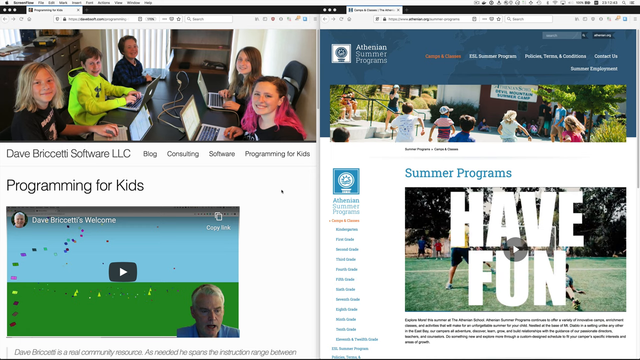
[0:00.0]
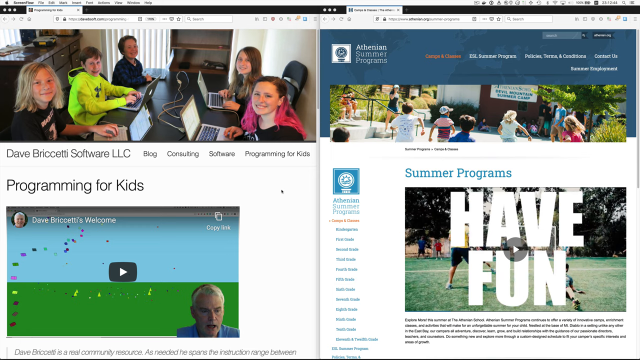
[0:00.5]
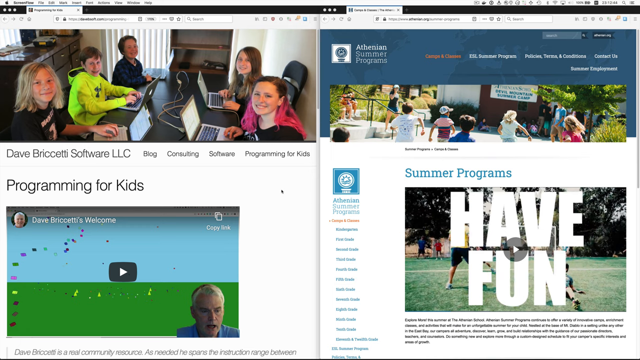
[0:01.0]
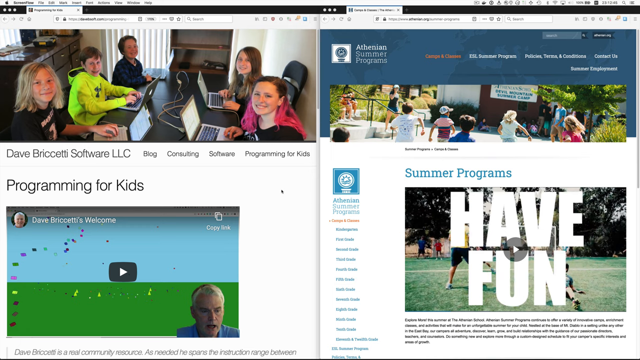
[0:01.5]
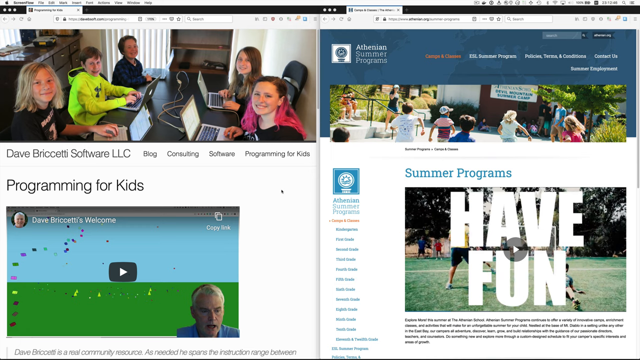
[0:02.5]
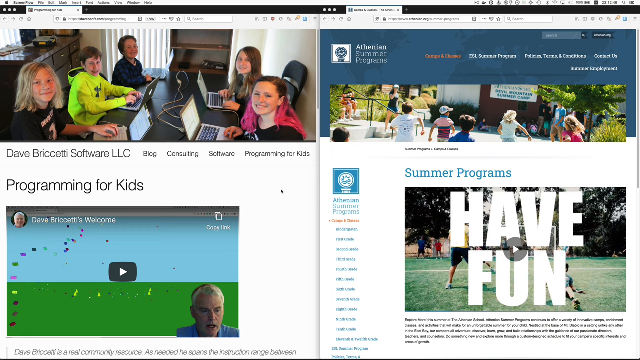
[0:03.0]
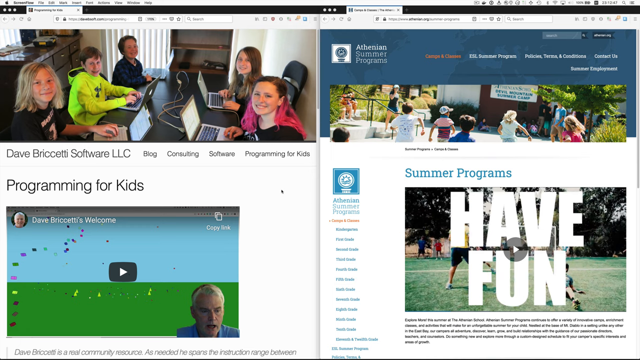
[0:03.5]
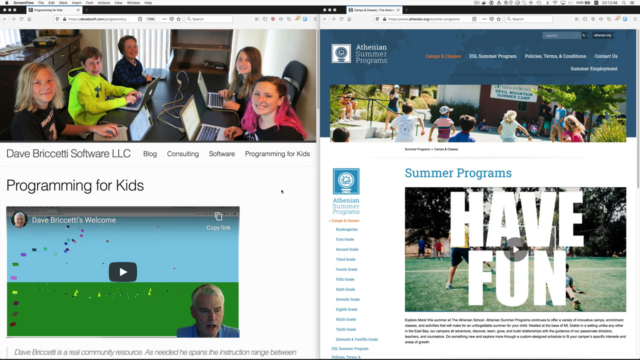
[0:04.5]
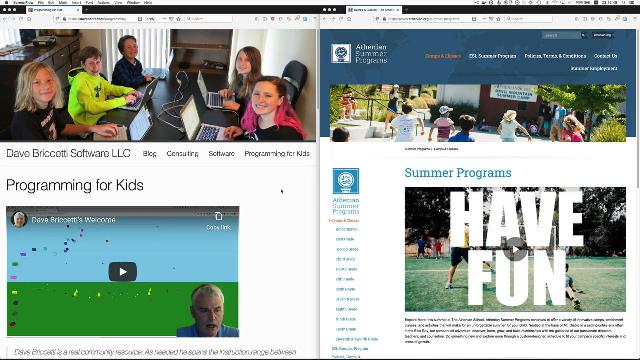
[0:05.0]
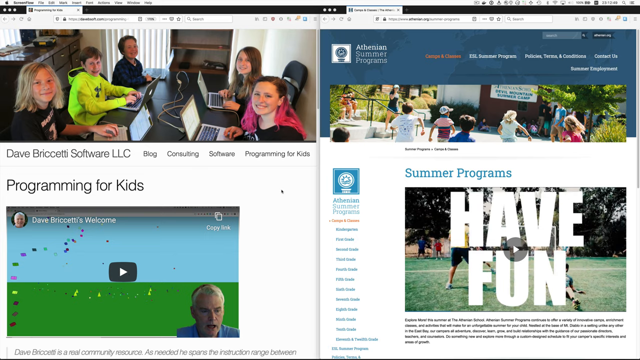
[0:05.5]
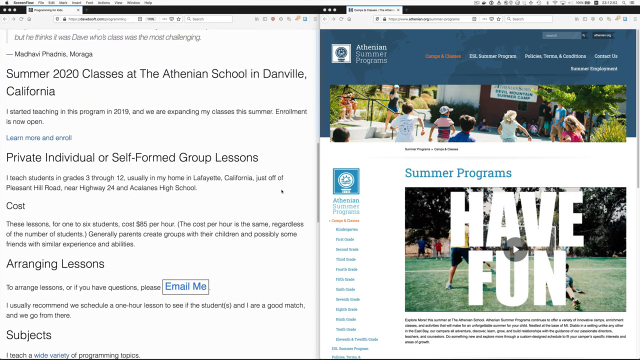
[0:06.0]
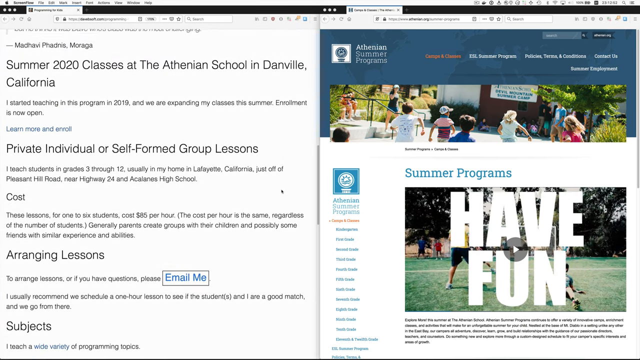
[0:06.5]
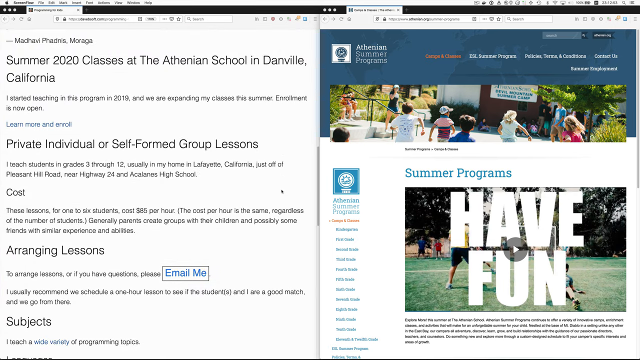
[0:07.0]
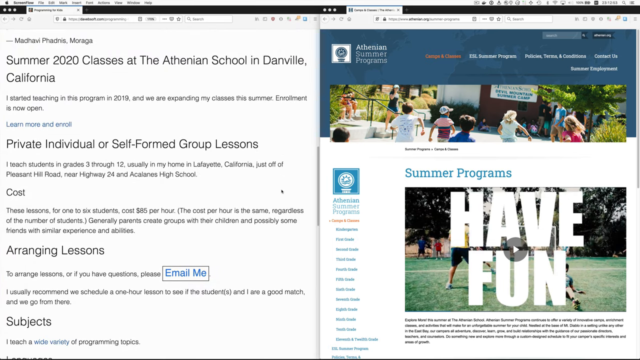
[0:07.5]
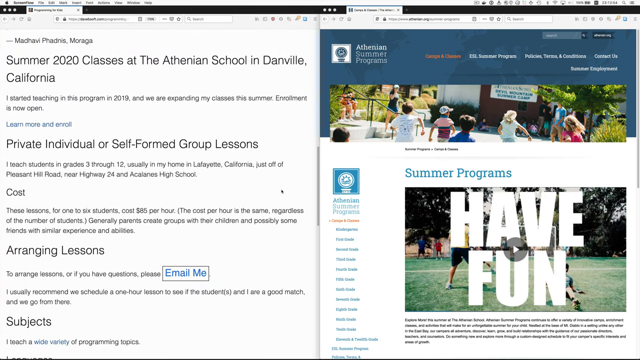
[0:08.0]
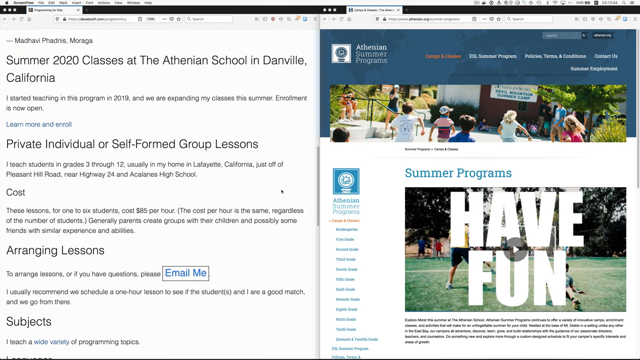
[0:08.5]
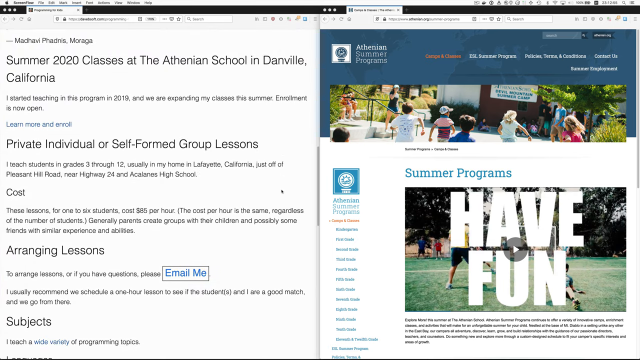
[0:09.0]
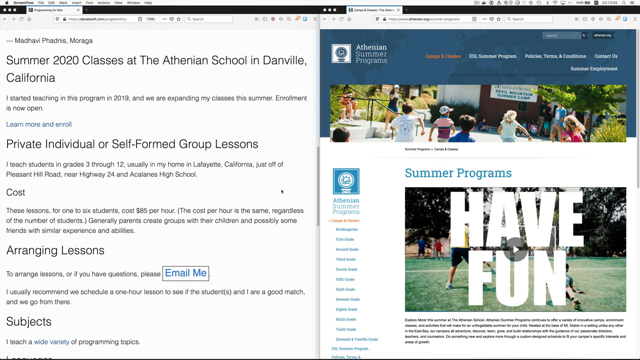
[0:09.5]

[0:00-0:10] A computer screen is shown. In the top left-hand corner is a photograph of five children who appear to be sitting at their laptops; they are smiling. On the bottom left-hand side is an image of somebody sharing their screen, perhaps explaining something. On the right-hand side of the screen is a summer program whose name is difficult to read; it looks like an Athenian summer program in the top corner of this part of the screen. Information then appears on the left side, with text reading "Summer 2020 classes at the Athenian School in Danville, California" and describing private, individual, or self-formed group lessons. There is information about the cost of the lessons and how to arrange them, with the words "to arrange lessons, or if you have any questions, please email me." The page seems to be giving information about this summer program.